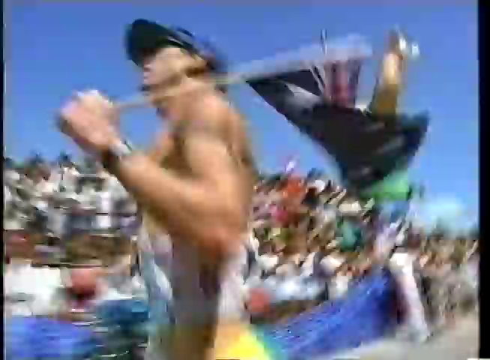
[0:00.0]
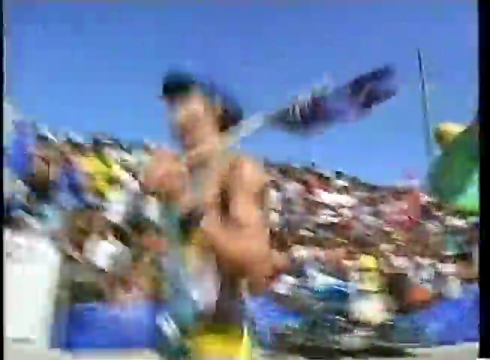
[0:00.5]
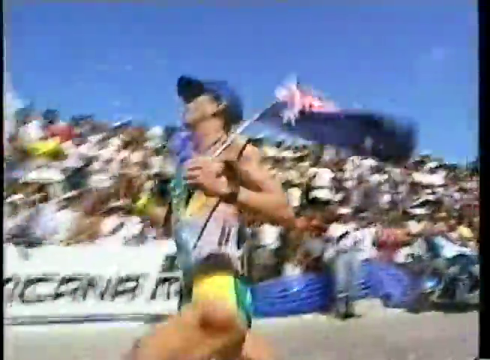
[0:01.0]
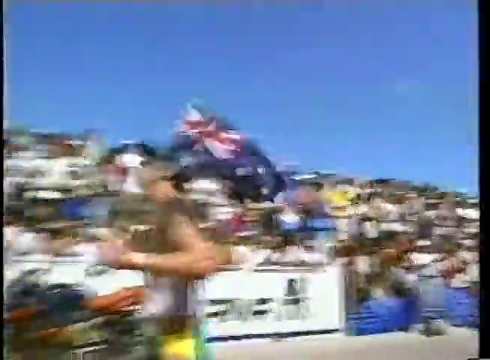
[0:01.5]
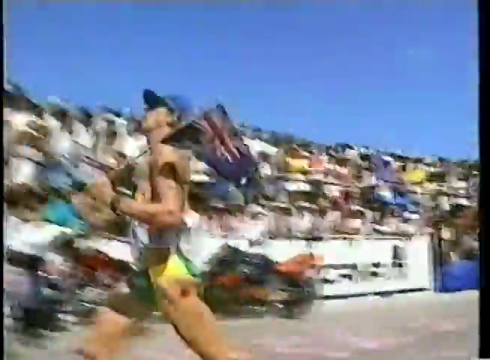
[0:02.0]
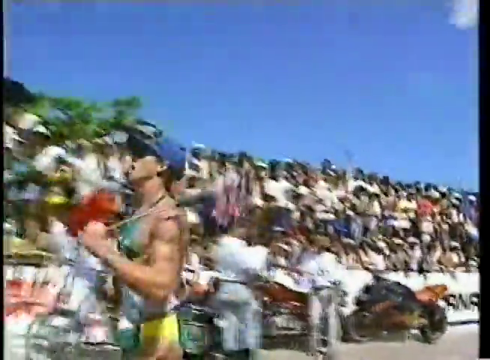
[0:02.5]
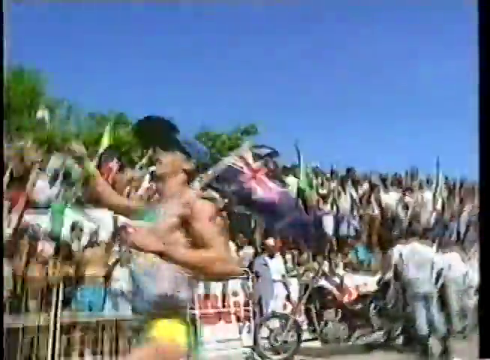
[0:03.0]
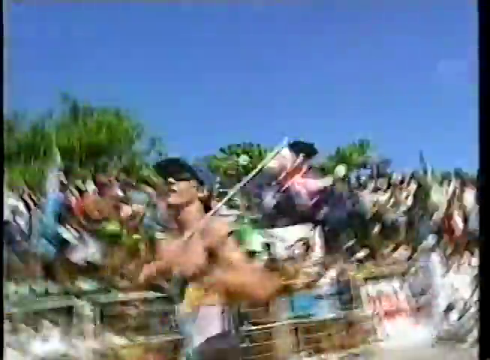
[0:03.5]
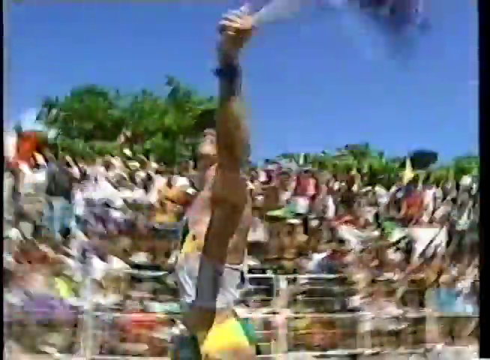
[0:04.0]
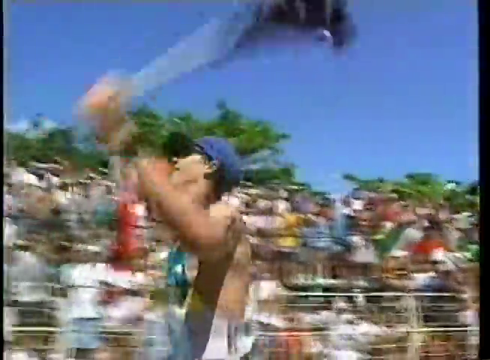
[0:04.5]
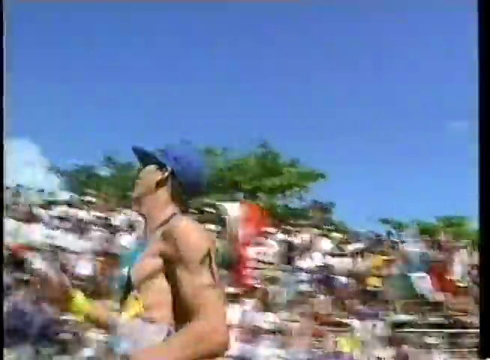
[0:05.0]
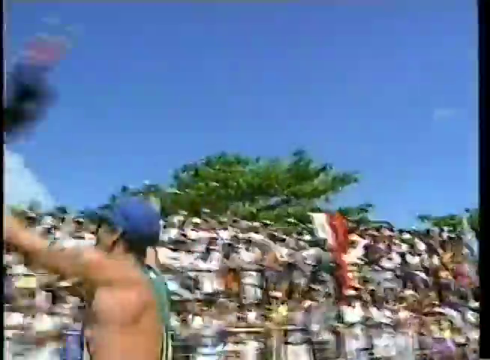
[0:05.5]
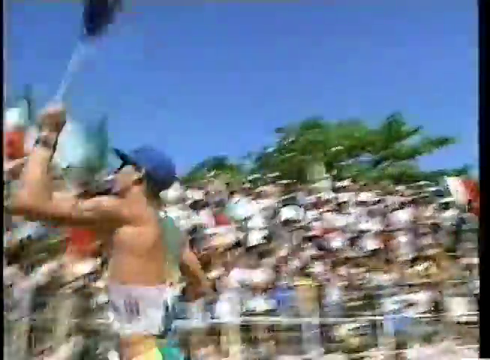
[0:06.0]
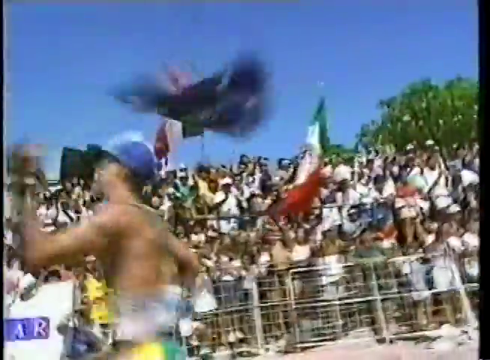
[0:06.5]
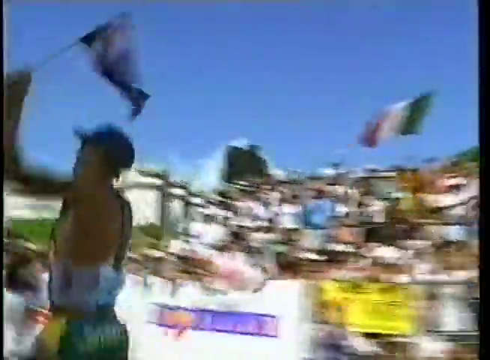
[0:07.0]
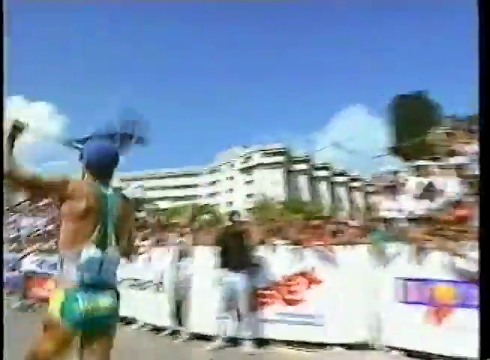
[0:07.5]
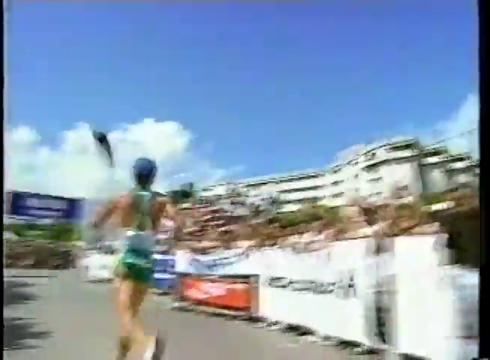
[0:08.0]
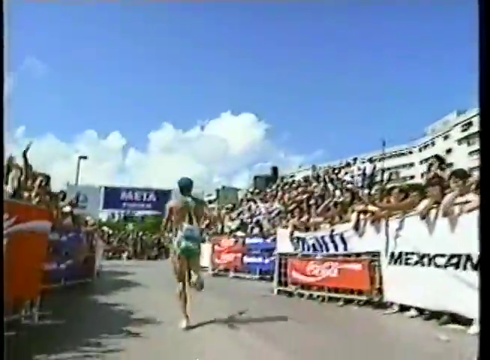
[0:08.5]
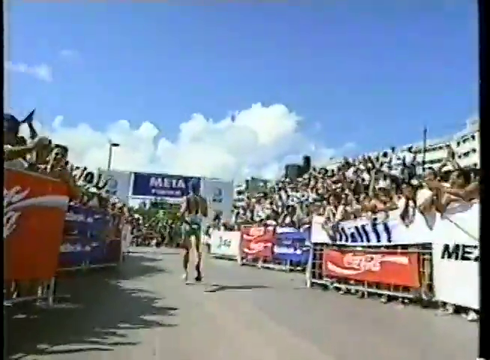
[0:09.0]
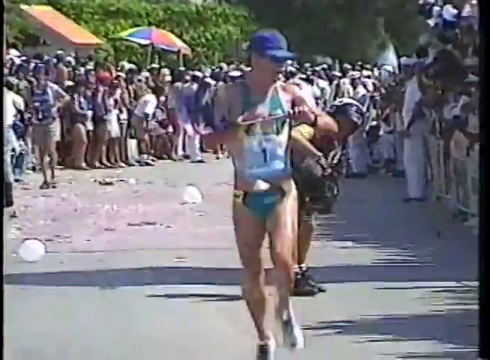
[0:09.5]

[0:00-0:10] A runner in very short shorts appears to be running toward the finish line, carrying some sort of flag, apparently a British flag, which the runner waves in the air. A large crowd of fans stands watching and cheering on the runners, especially this runner, who wears a blue hat, a white jersey-like T-shirt and very short shorts while running toward the finish line. The weather looks great, with blue skies and some puffy clouds. The runners are very muscular.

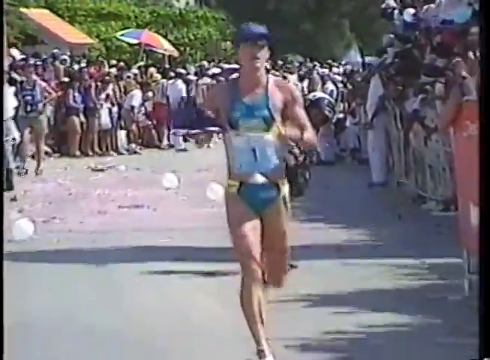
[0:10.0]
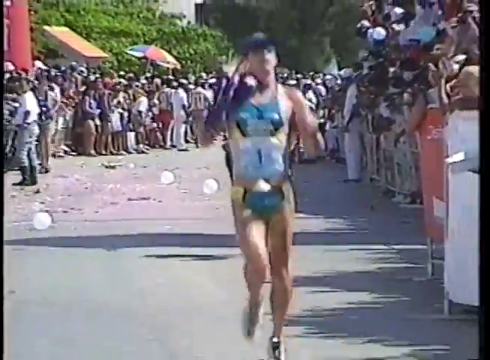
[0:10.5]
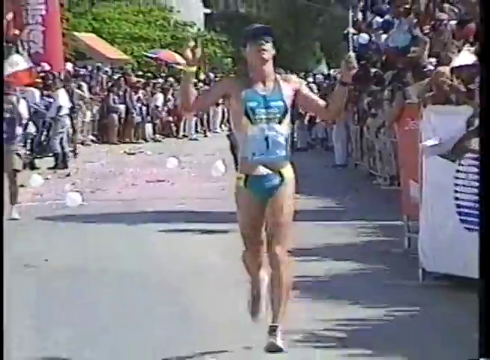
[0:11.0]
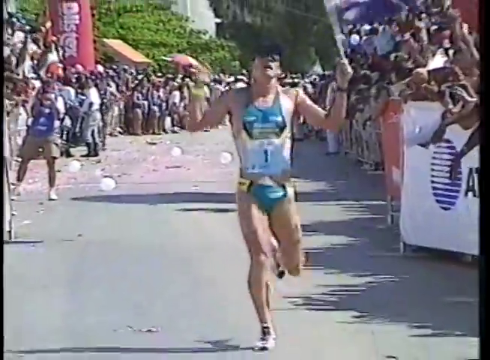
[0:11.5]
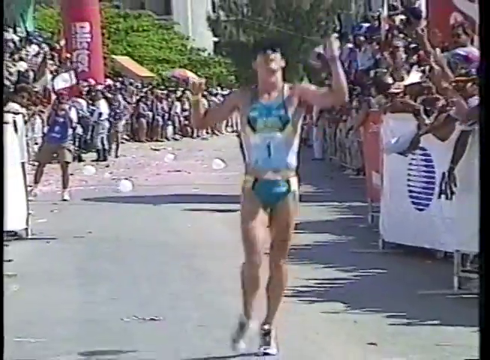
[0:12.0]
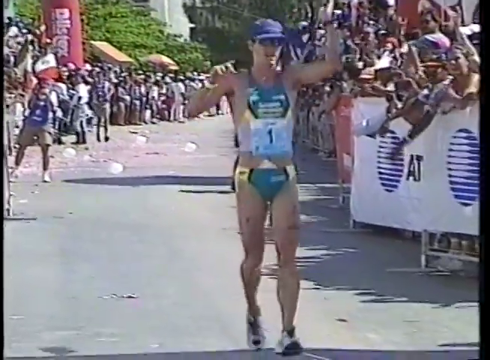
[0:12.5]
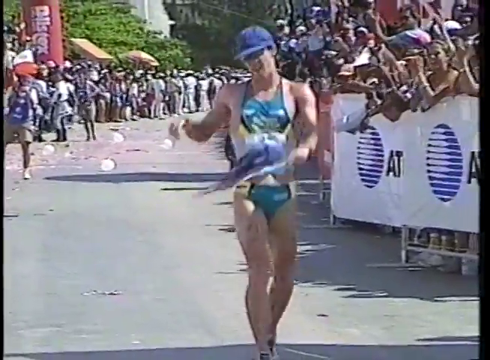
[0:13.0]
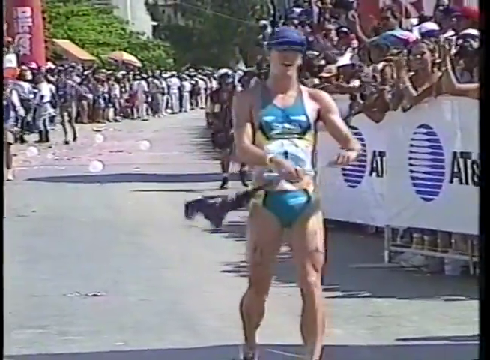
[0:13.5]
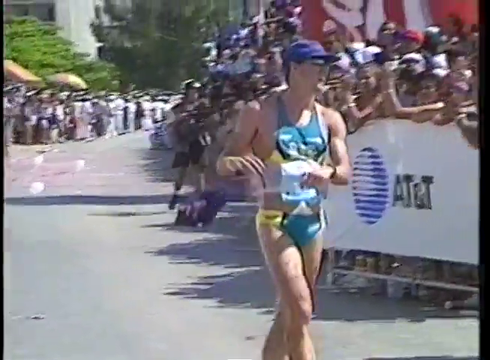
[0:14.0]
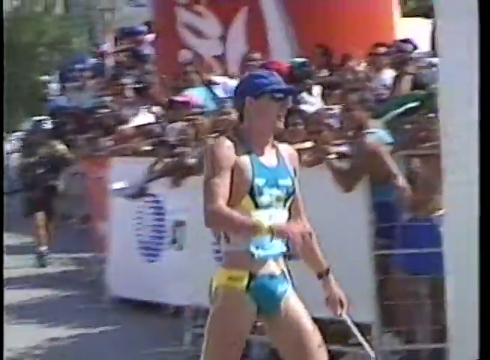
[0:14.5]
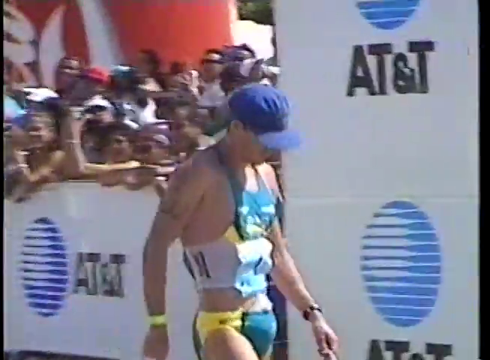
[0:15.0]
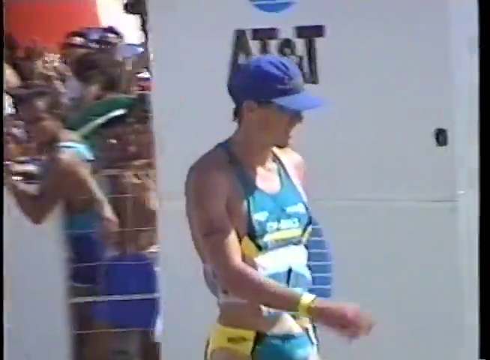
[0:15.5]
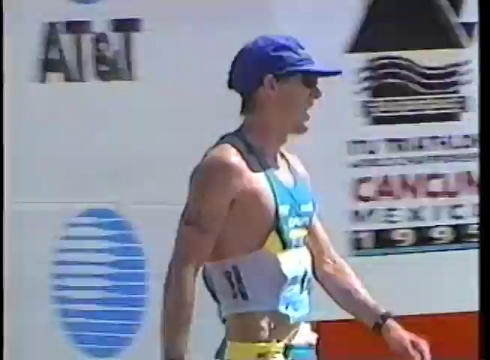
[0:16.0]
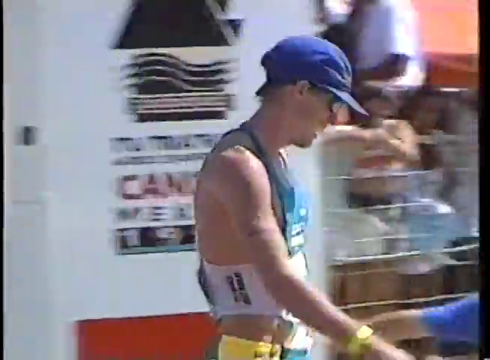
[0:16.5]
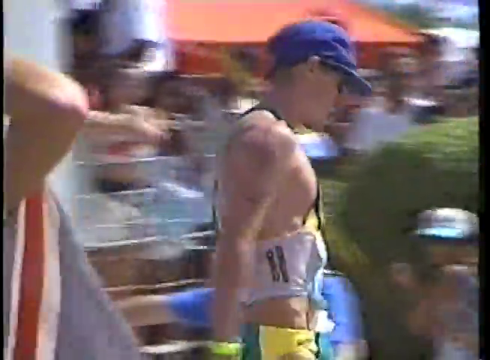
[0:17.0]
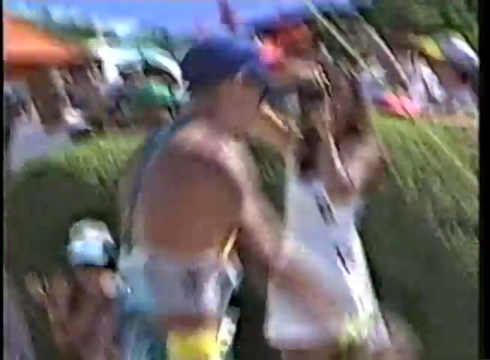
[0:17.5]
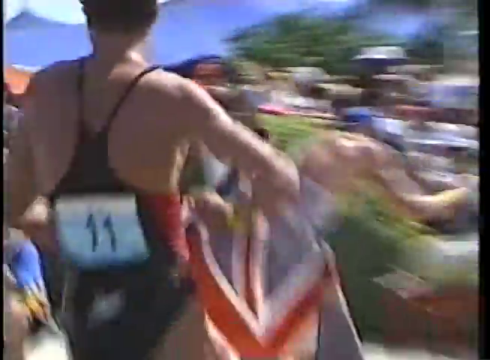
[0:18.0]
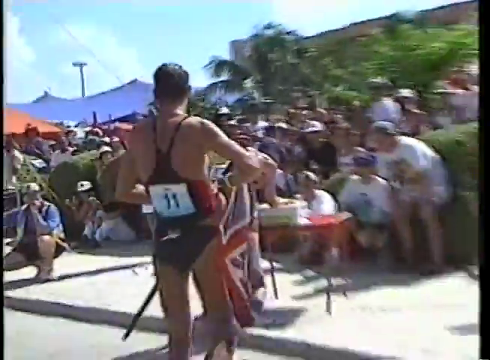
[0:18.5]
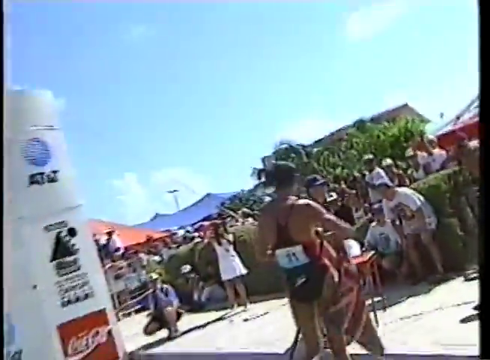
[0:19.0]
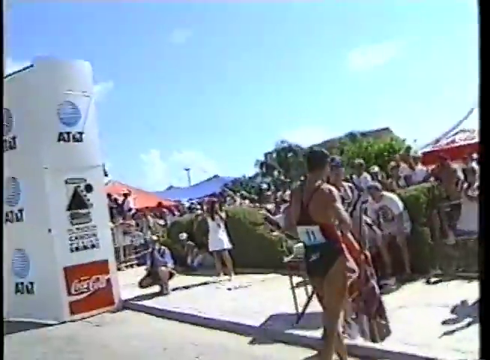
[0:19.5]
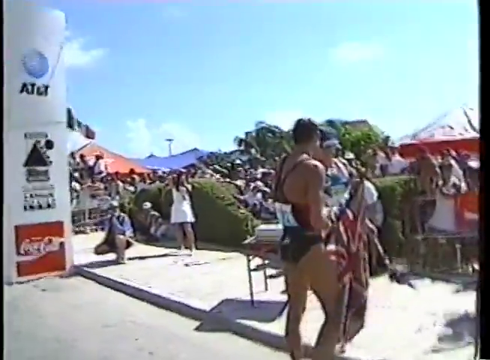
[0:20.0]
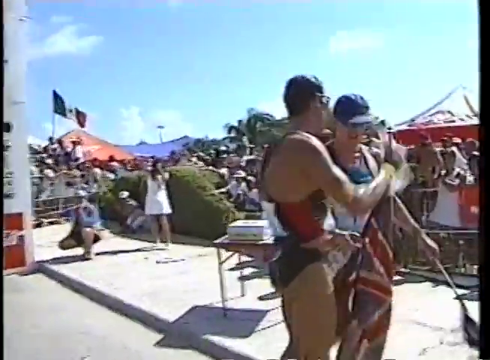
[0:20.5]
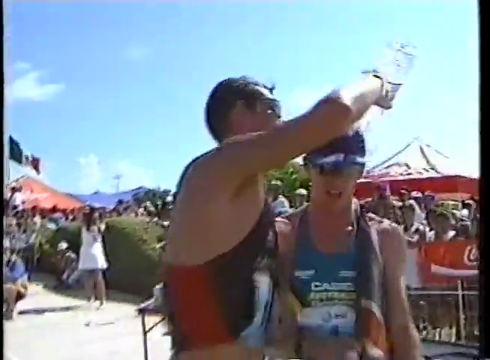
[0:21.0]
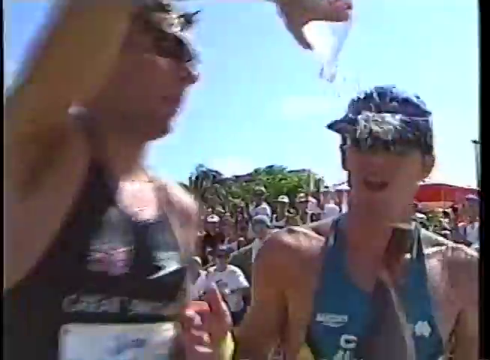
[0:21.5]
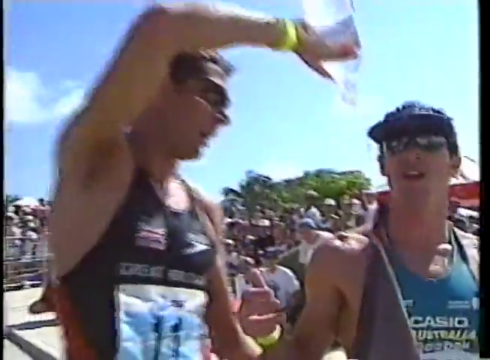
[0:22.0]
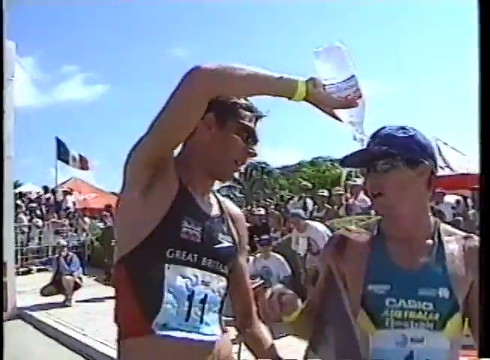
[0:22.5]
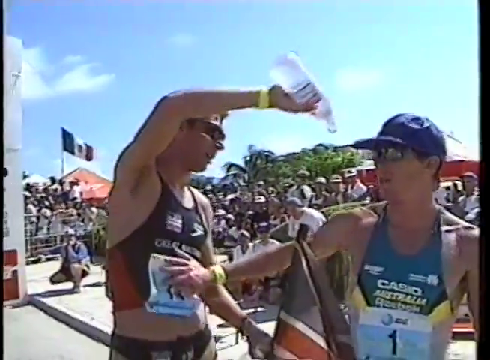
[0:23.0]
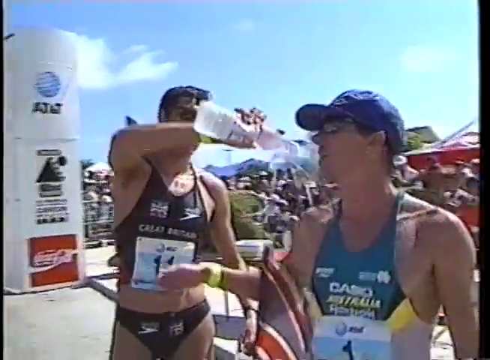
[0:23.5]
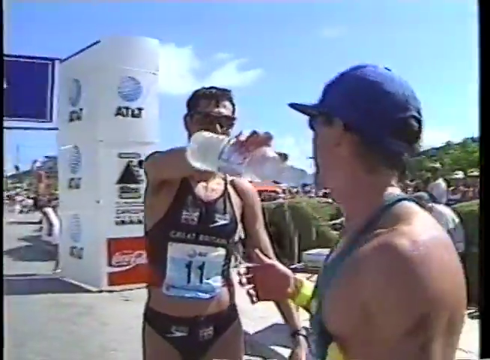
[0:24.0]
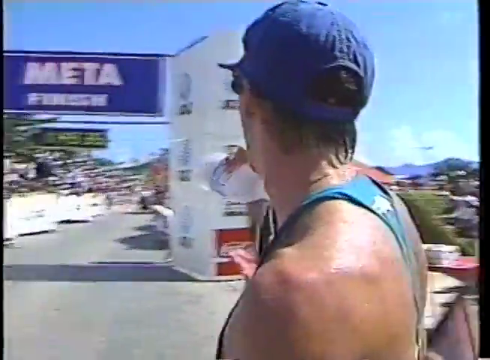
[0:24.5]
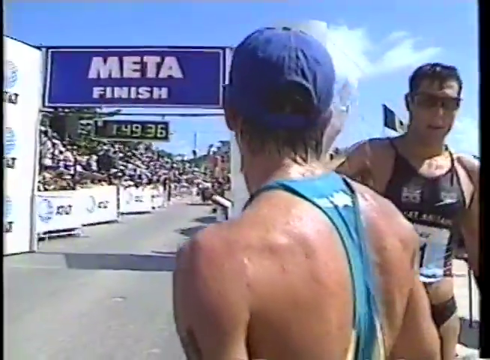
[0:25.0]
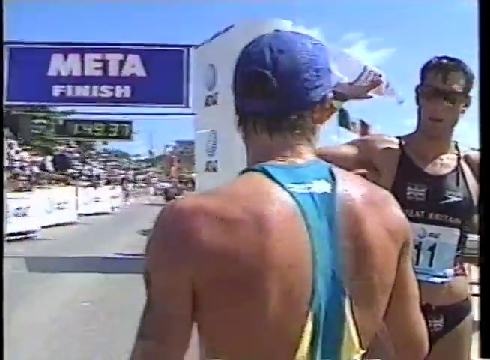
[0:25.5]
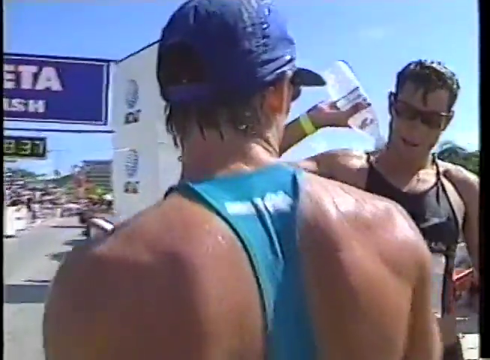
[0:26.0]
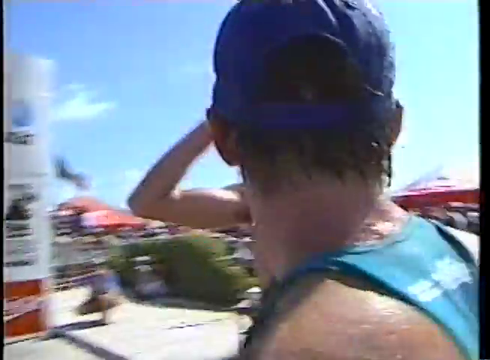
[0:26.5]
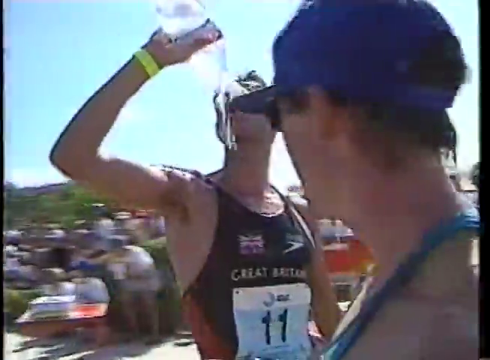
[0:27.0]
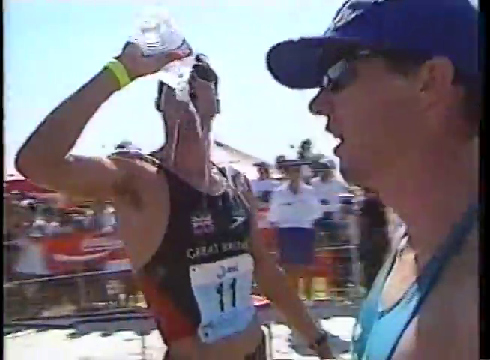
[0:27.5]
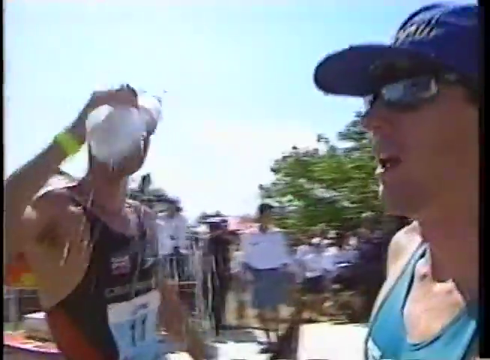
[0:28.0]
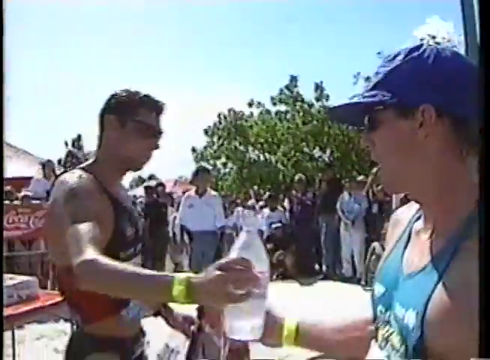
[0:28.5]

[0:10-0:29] The runners are male. Another male stands next to one of them, dousing him with water, apparently to cool him down. Another male douses himself with water; he wears almost underwear-like shorts and a jersey with his midriff showing. Fans stand along the sides cheering on the runners with flags in their hands. One runner has a British flag and something at the front of his shorts, possibly a sweat rag, and also wears very, very short, underwear-like shorts. Advertisers' signs are all around the finish line area. It looks to be a warm day, with blue skies and green trees, and all kinds of flags are in the stands with the fans. Some unidentified debris is in the roadway. The runners look hot after their run.